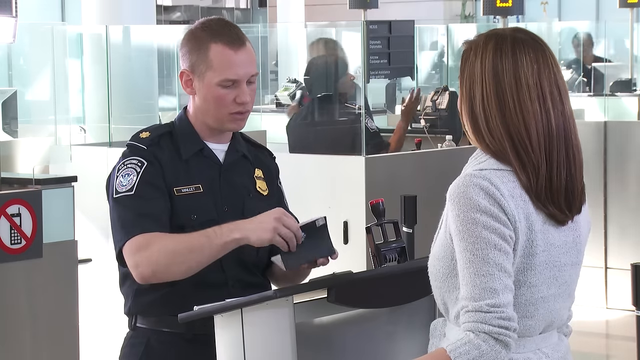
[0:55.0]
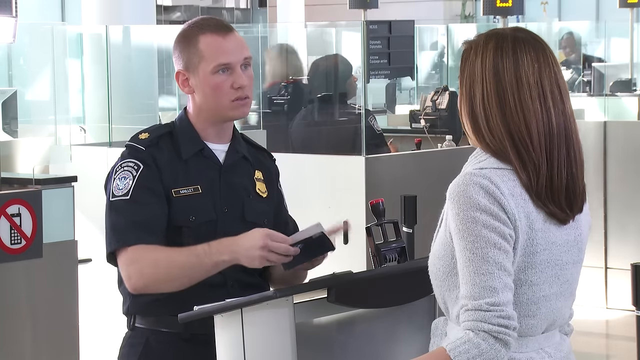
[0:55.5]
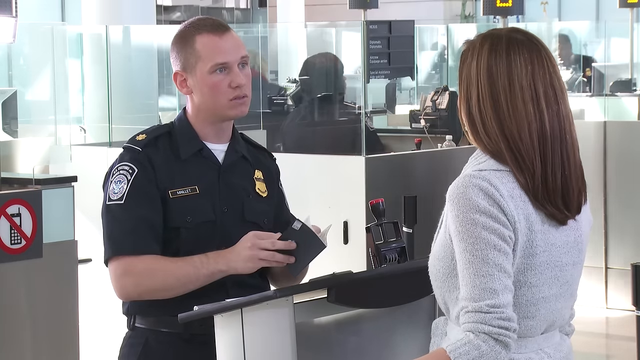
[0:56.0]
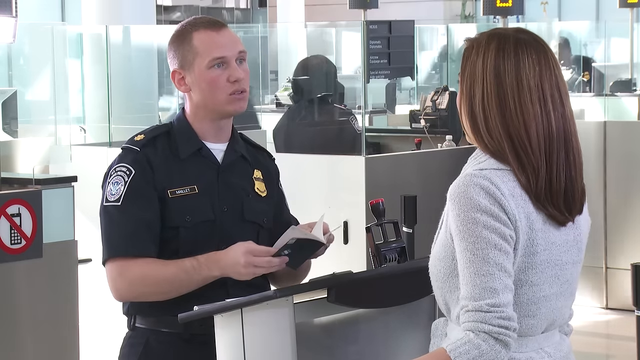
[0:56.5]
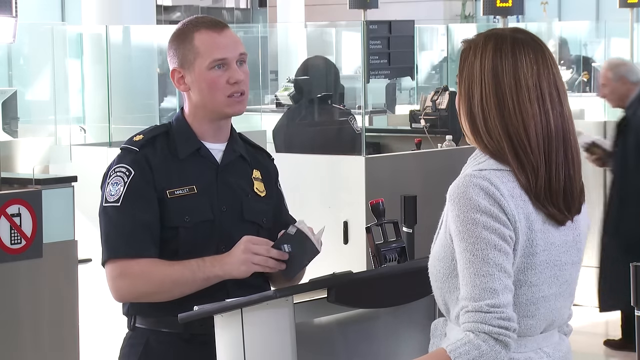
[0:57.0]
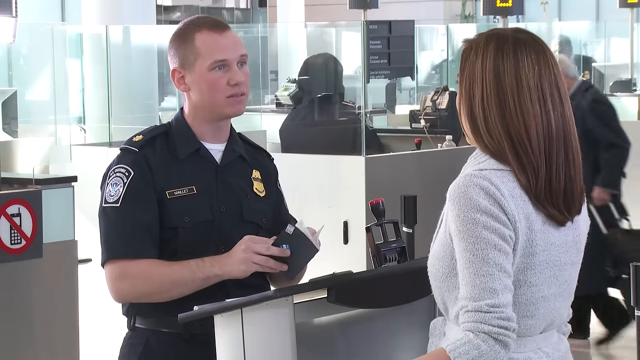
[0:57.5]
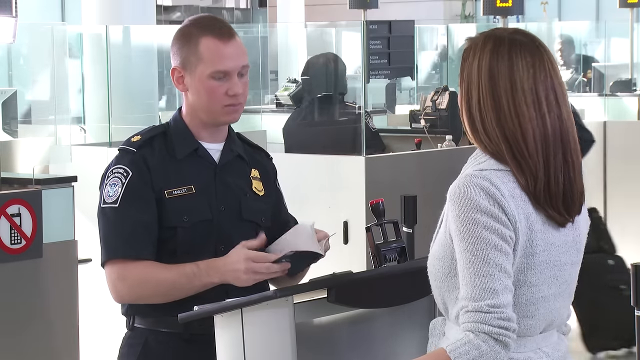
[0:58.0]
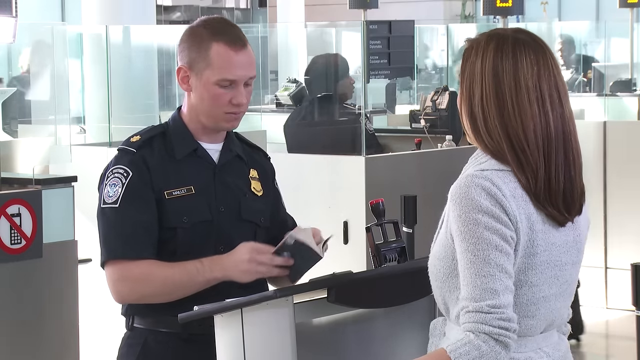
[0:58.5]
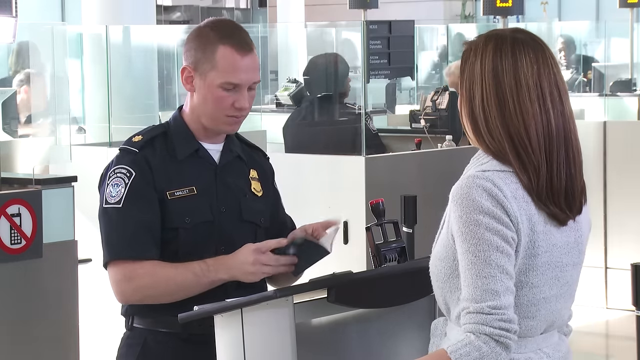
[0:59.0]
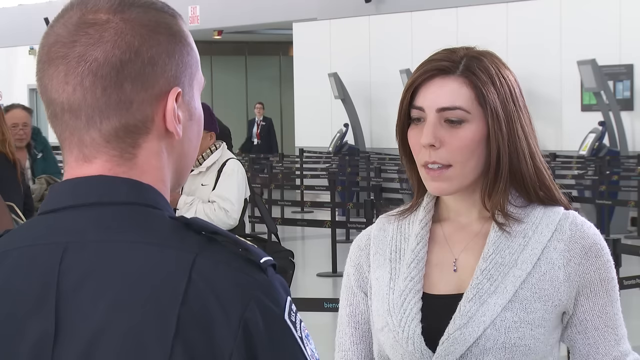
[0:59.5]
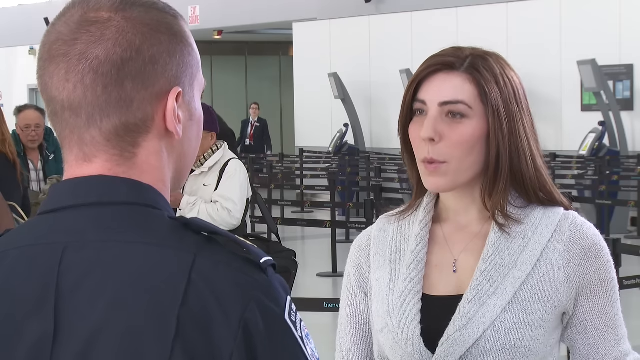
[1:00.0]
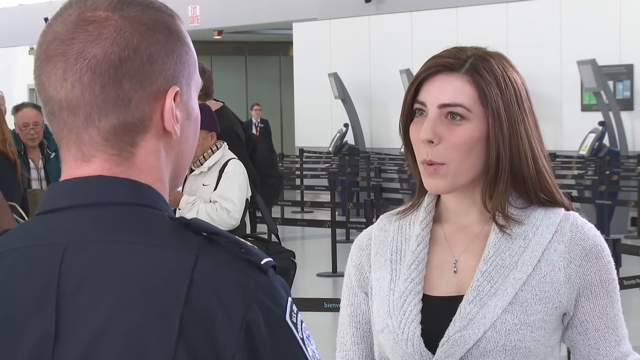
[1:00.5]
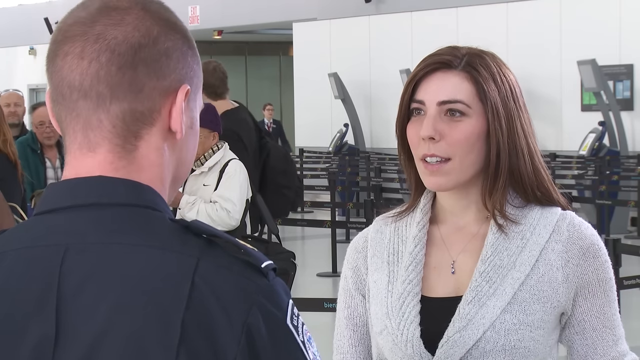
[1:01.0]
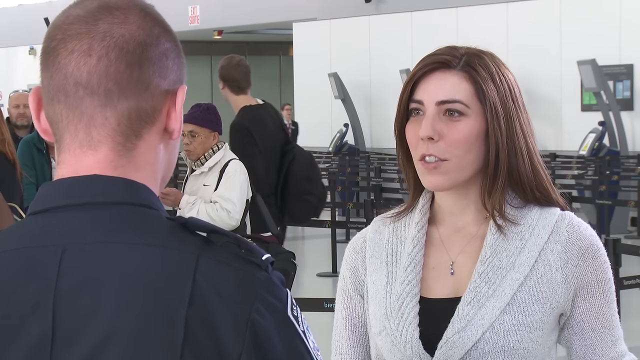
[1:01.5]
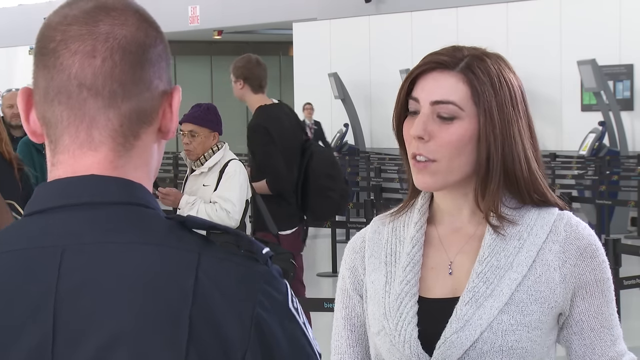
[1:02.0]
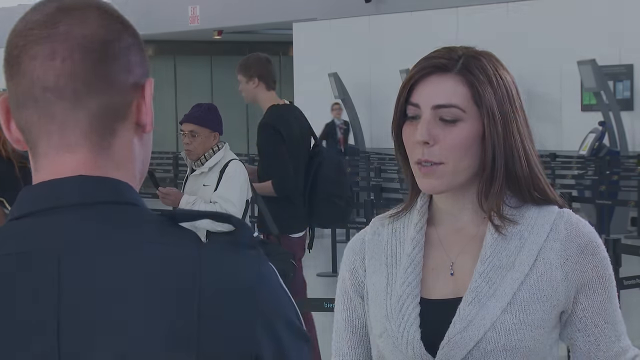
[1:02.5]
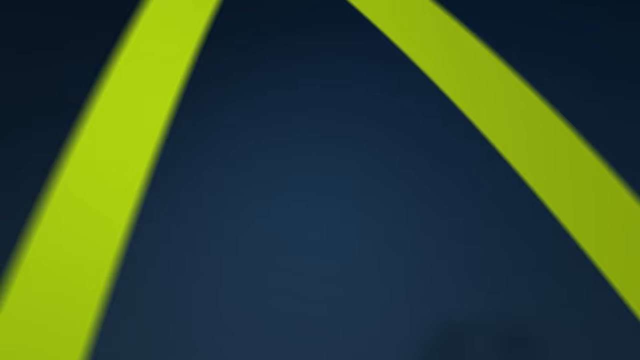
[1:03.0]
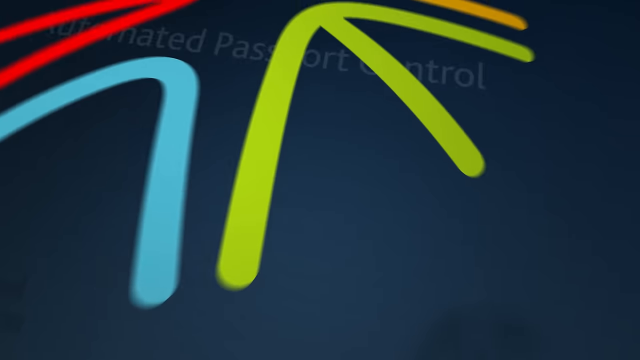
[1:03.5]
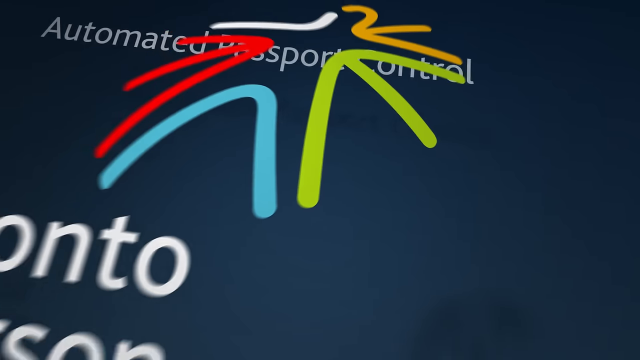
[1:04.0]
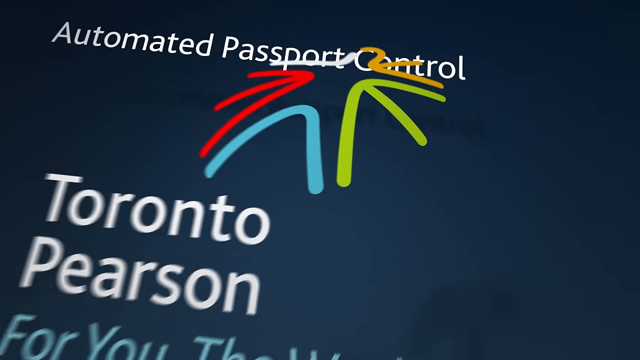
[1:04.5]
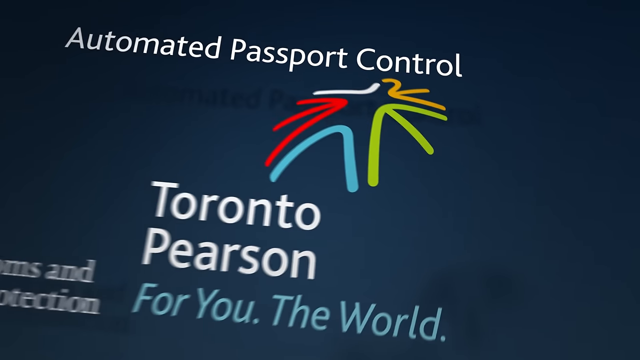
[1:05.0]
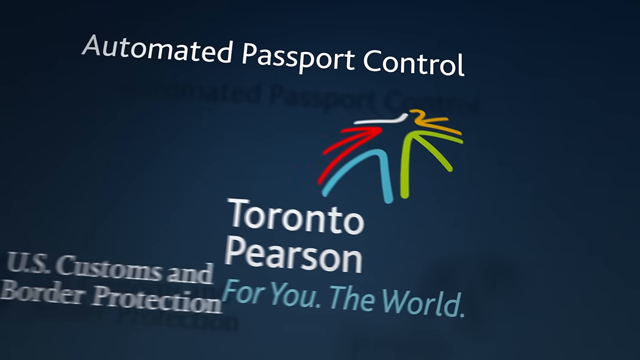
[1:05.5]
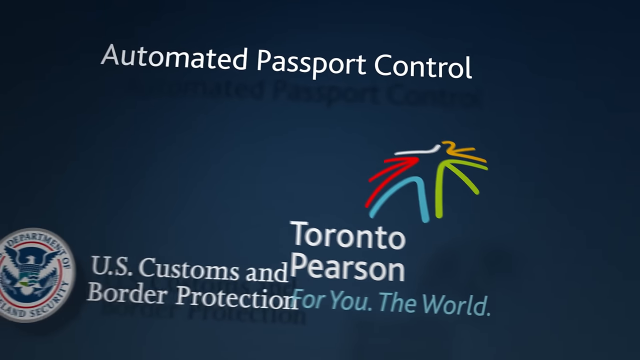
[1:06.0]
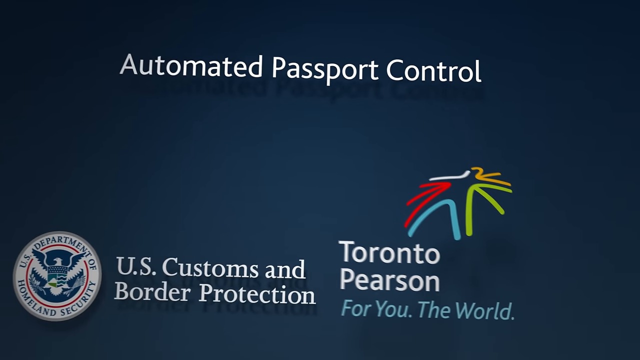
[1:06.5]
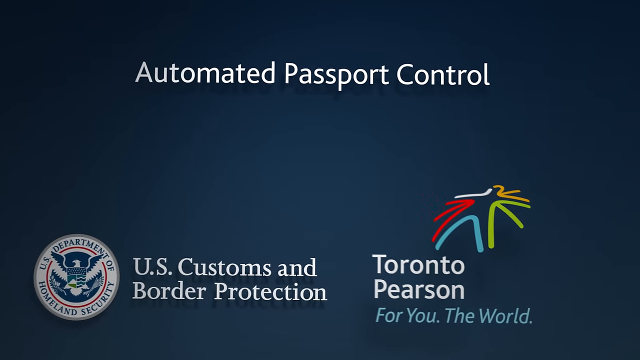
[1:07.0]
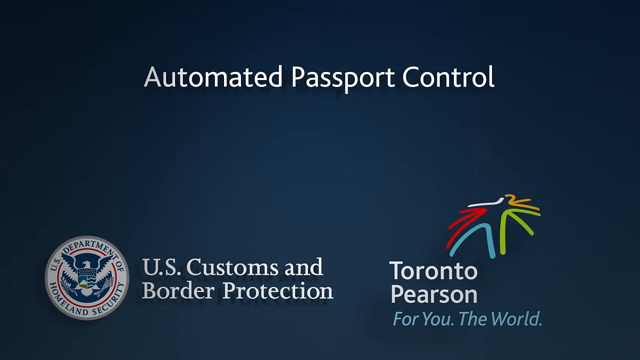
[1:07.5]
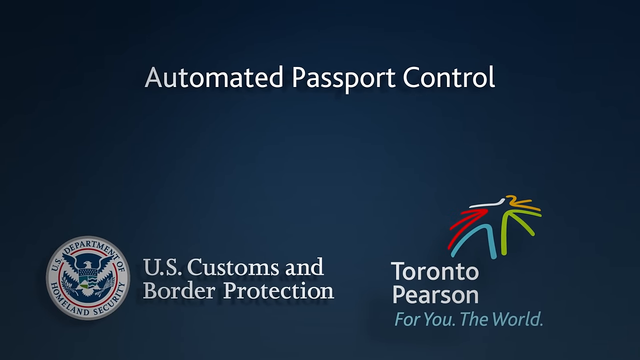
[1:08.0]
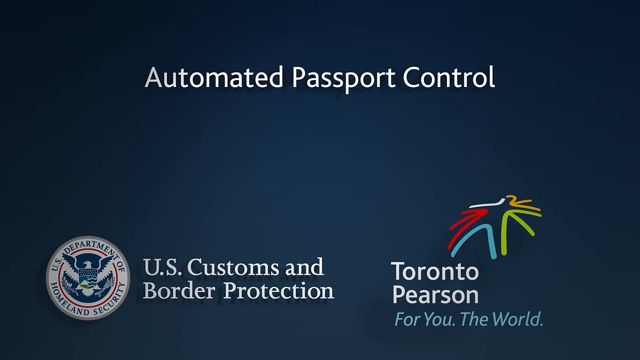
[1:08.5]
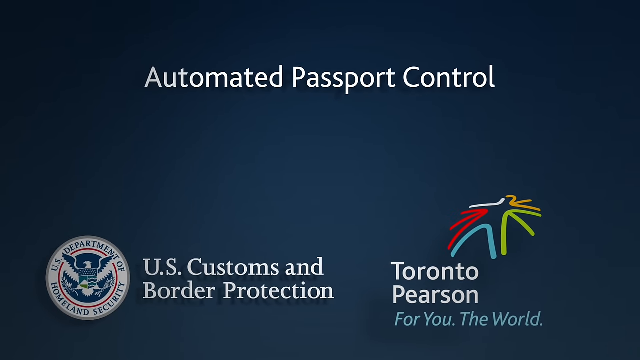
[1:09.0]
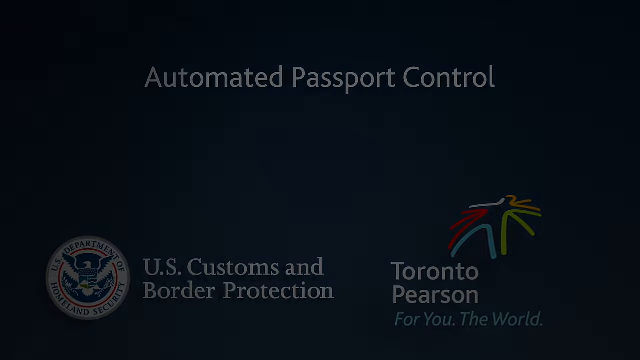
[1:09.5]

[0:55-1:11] The agent continues chatting with the woman, flipping through the pages of her passport in a friendly, formal conversation. In the background, an older man pulls his luggage along as he approaches the window behind them, and people stand in the line behind the woman. He is apparently asking her questions about her trip and why she is traveling. The camera goes back to her in close-up as she responds. People in the line and flight attendants walking are visible in the background. Then the blue opening screen appears again, looking sort of like an early-2000s PowerPoint, reading "Automated Passport Control" with the U.S. Customs and Border Protection logo on the left and the Toronto Pearson logo on the right. At the bottom of the Toronto Pearson logo is its tagline, "For You. The World."